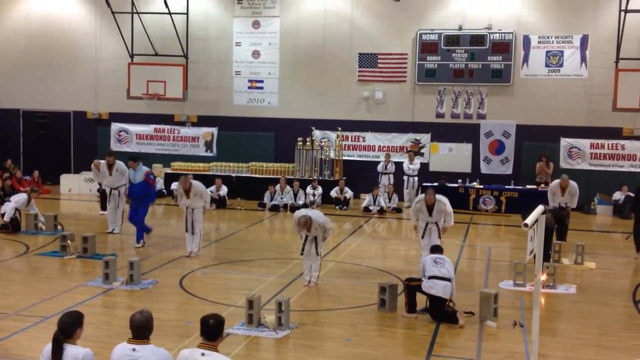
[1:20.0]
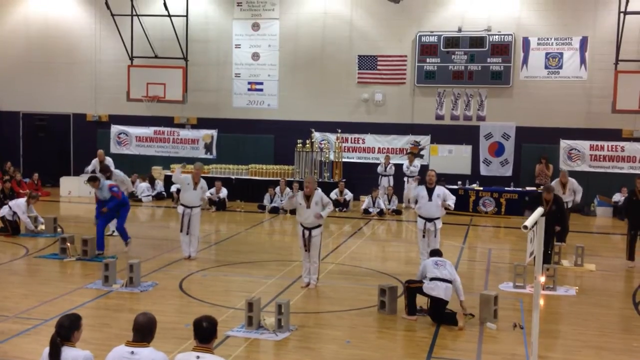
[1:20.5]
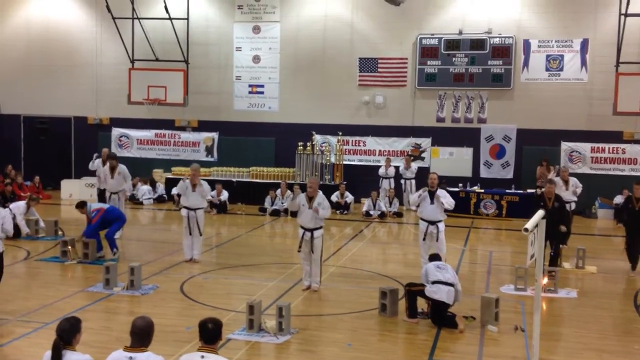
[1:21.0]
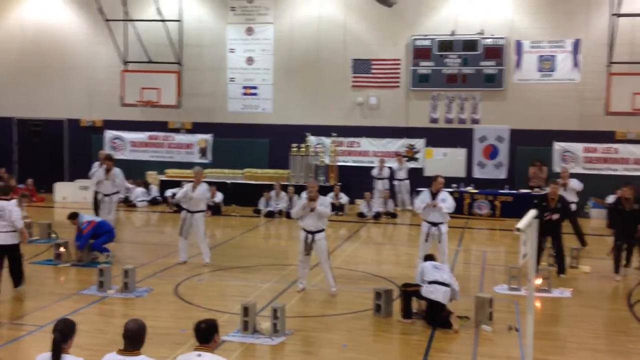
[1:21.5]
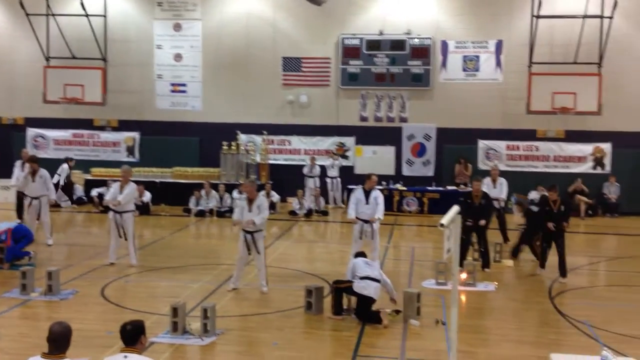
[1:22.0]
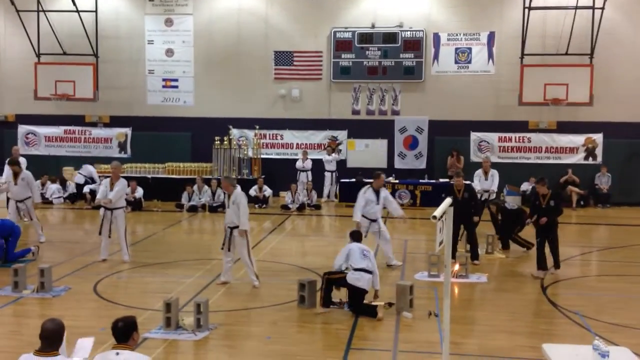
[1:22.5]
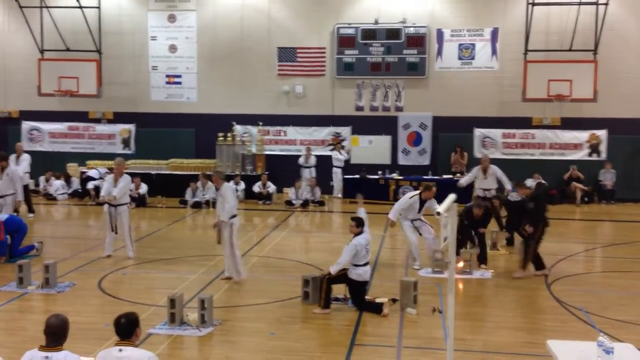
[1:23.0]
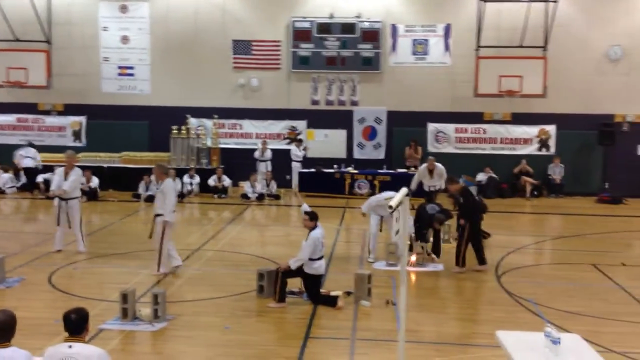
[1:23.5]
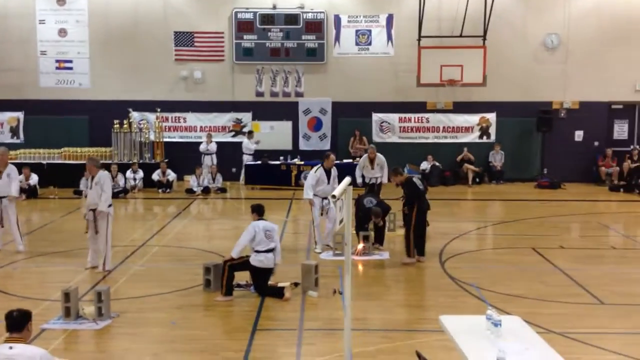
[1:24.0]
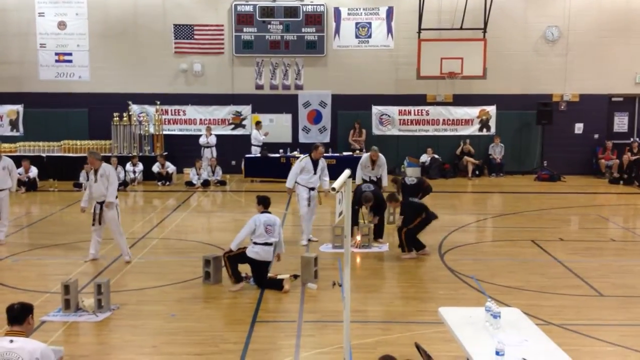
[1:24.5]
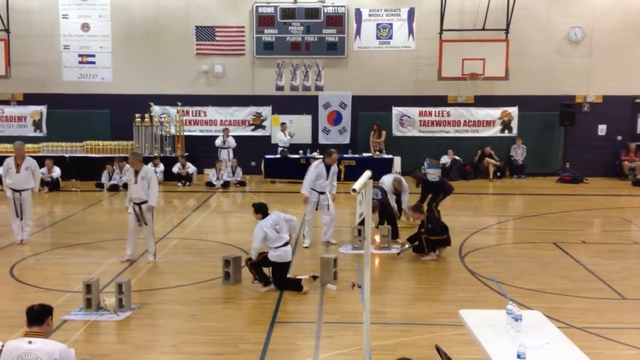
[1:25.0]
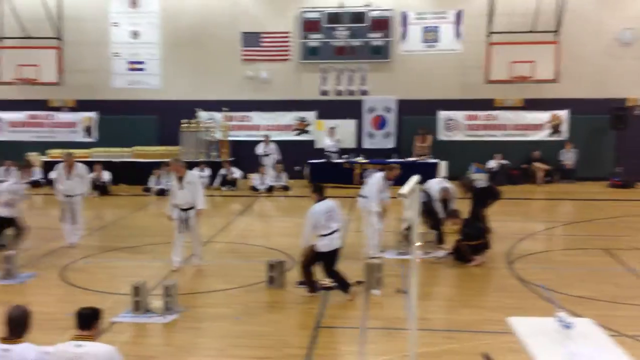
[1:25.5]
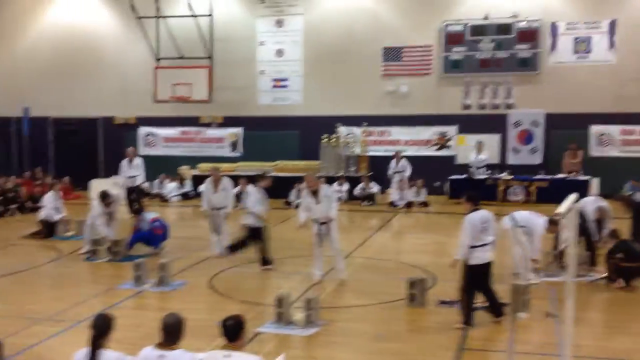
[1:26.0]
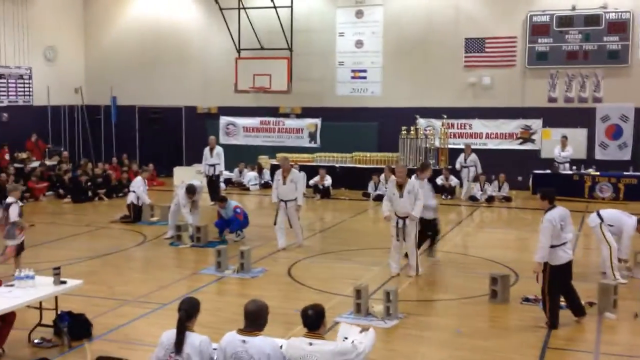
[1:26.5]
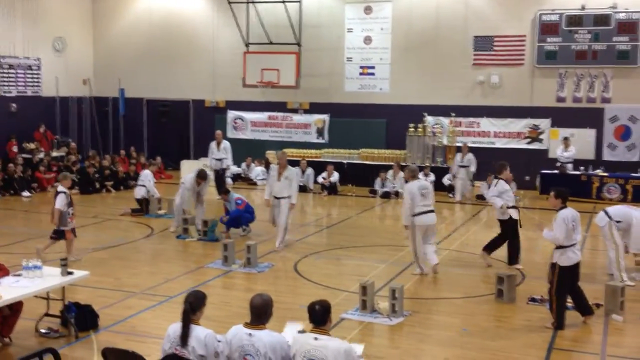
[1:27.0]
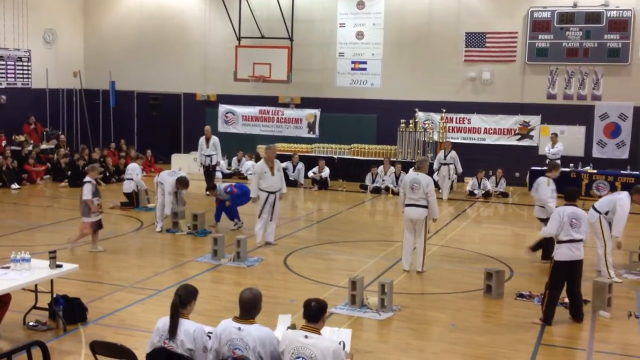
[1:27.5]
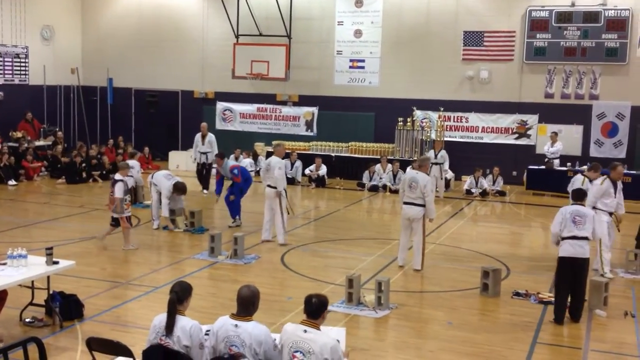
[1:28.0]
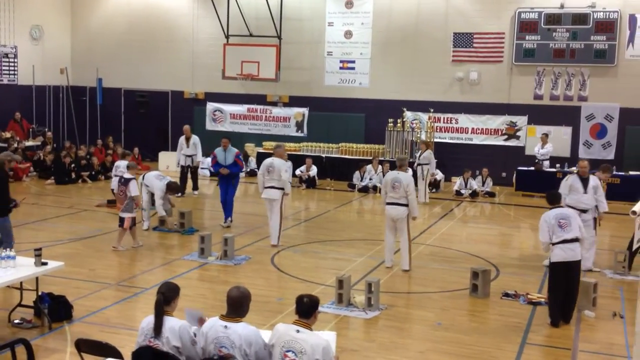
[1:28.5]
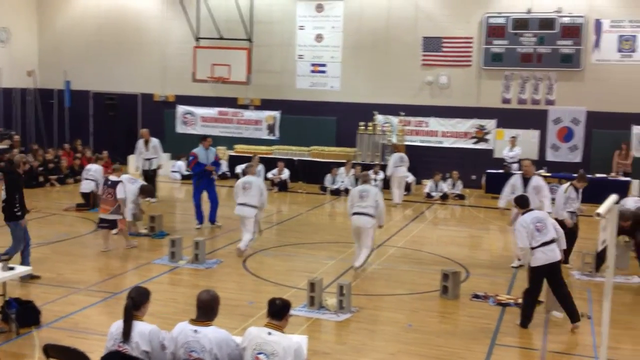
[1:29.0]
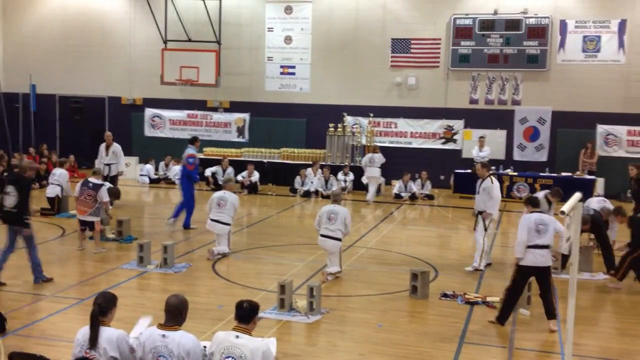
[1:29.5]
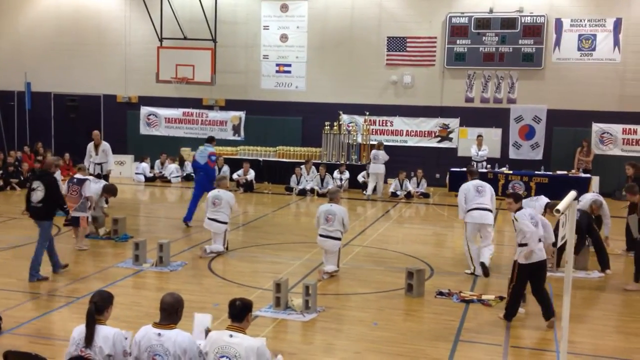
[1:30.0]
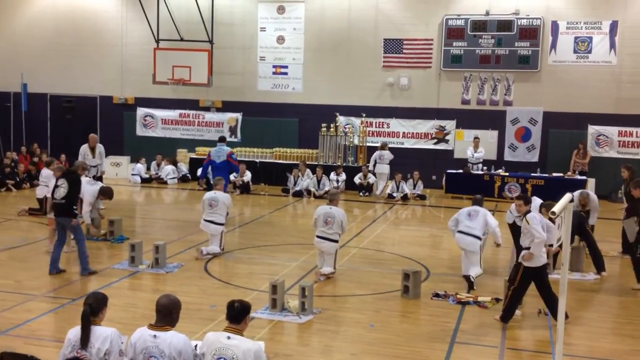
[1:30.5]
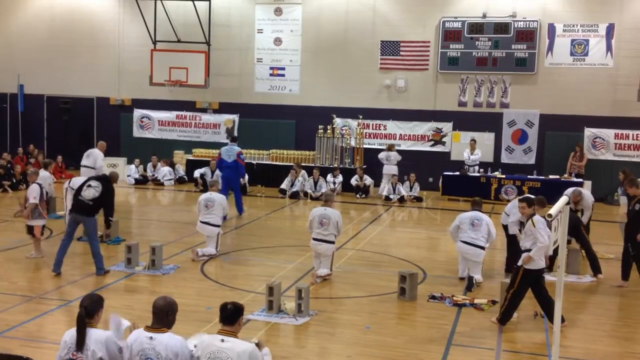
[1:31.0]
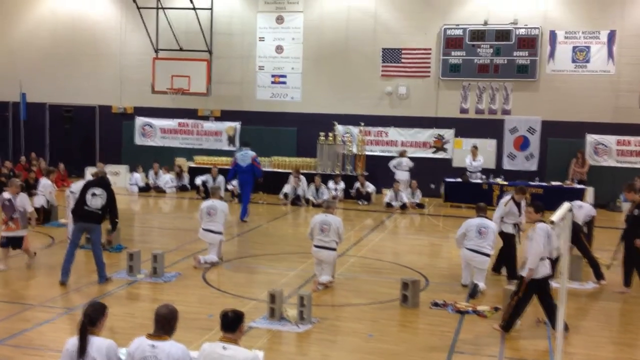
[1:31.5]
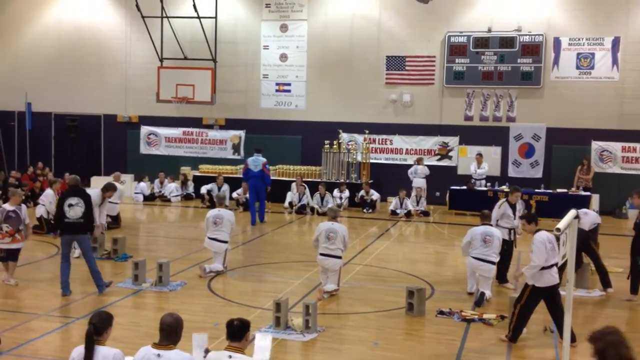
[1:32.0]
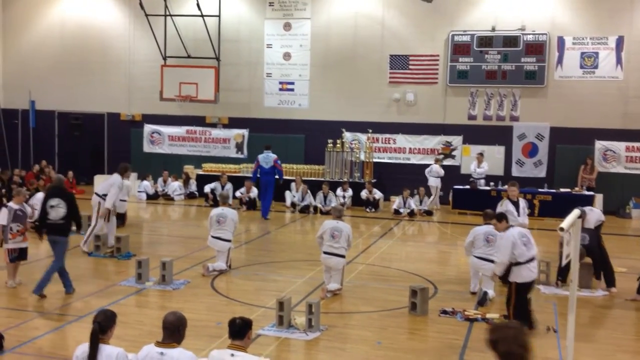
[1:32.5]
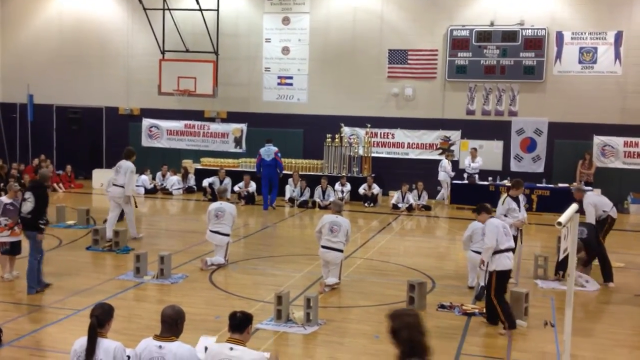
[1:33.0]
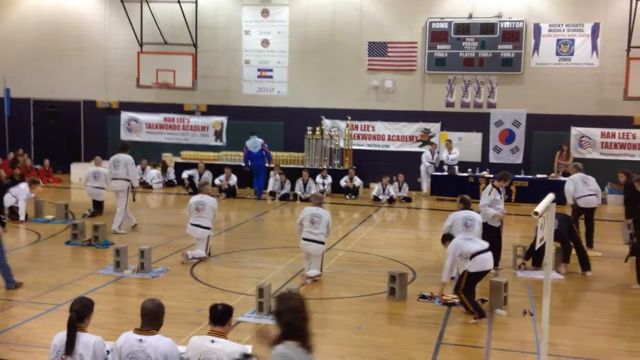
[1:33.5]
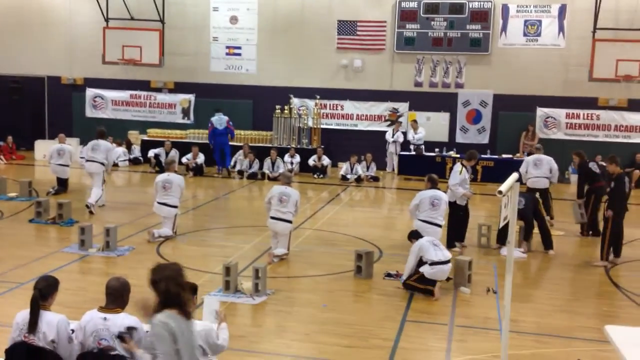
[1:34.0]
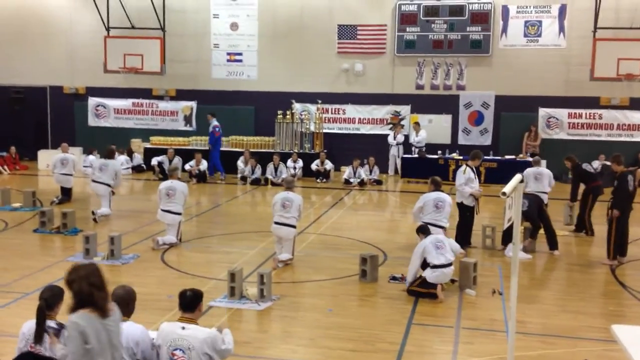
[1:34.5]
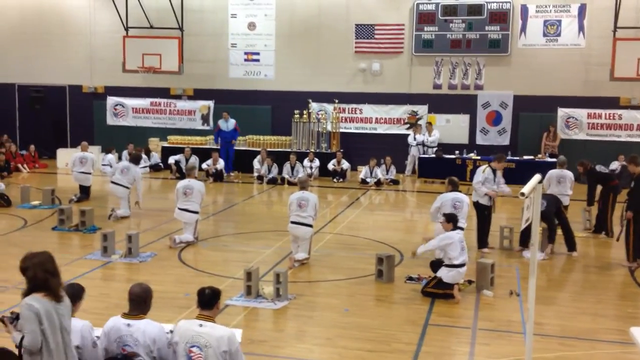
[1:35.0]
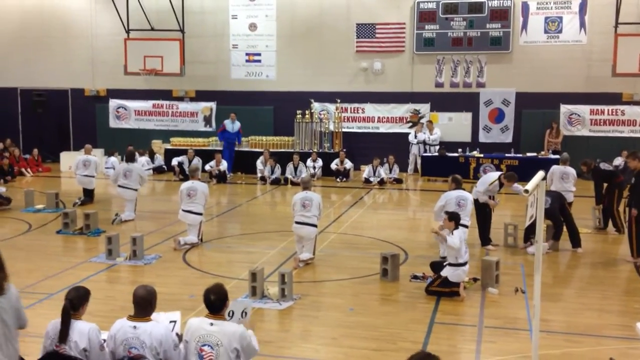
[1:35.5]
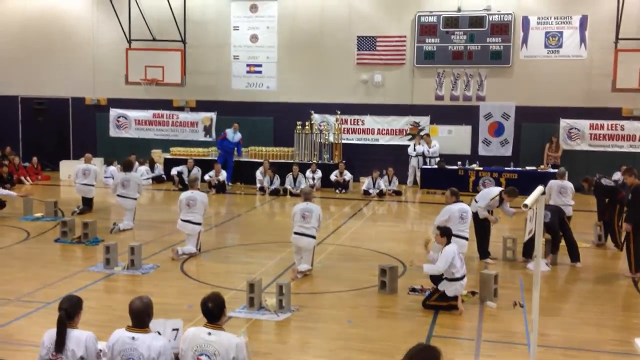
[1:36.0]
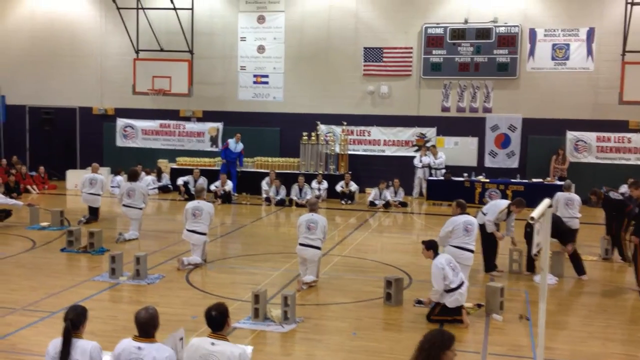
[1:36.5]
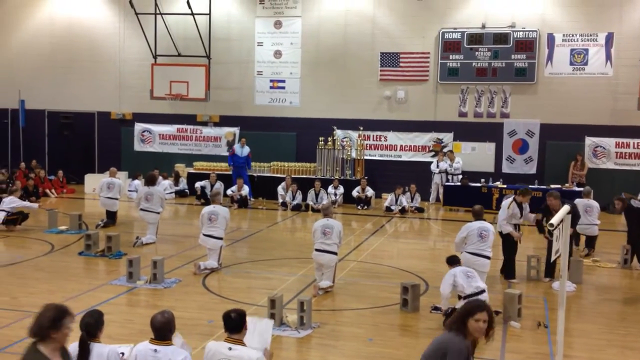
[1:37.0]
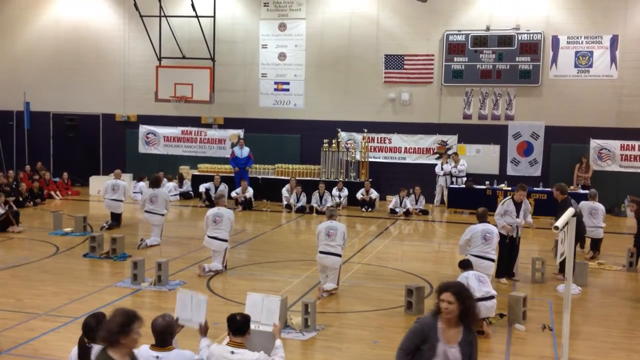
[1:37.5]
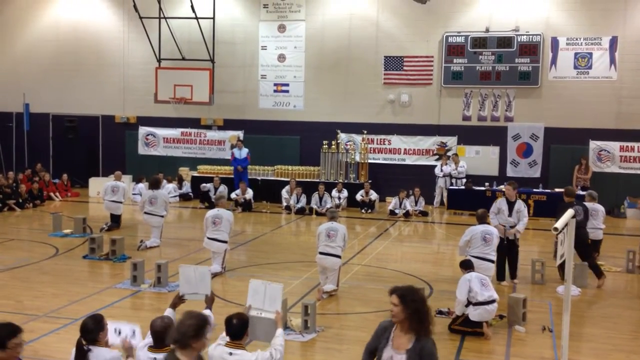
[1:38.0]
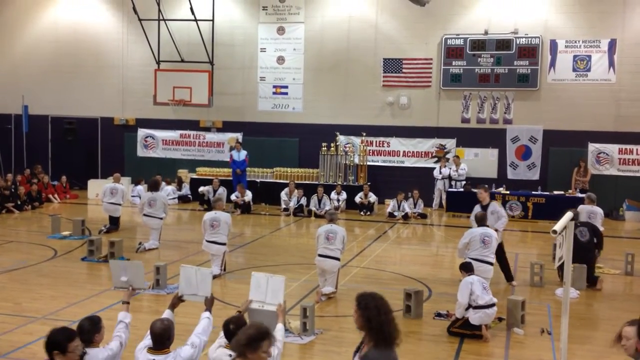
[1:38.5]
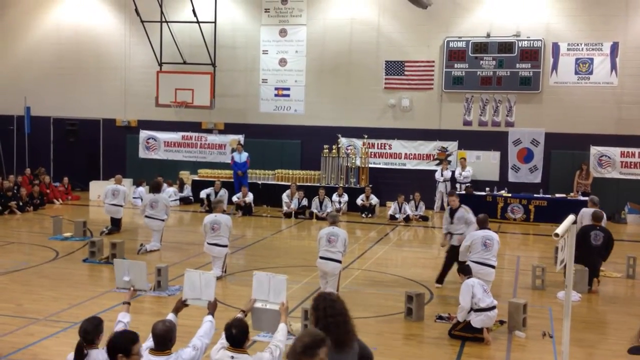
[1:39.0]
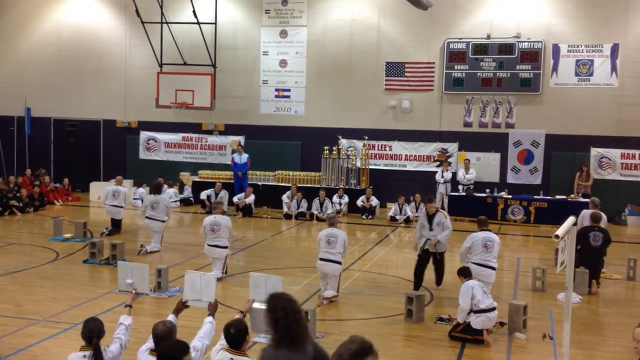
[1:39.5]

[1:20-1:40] The performance is over. Some people crowd around the man on the edge, trying to put out the fire, which is still going, and another person runs over to help. People pick up and check the materials where each performer stood to make sure the fires are out. The performers in their outfits then kneel, facing the other way, toward people sitting in the front. The people at the tables, apparently judges, hold up signs in their hands, seemingly giving some sort of score. At first the judges prep their papers, flipping pages to find the score they want before holding it up. Numbers written on the cards are briefly visible, though not all of them, so they are like scorecards. People also sit off to the side.